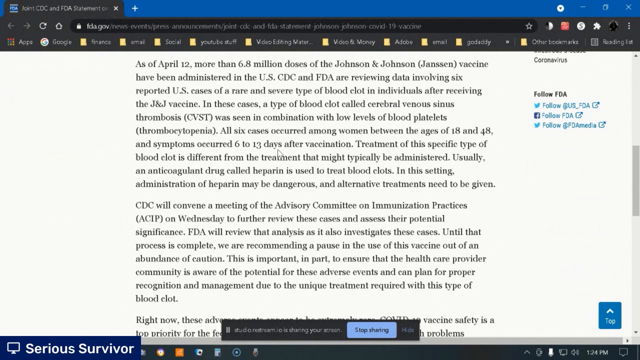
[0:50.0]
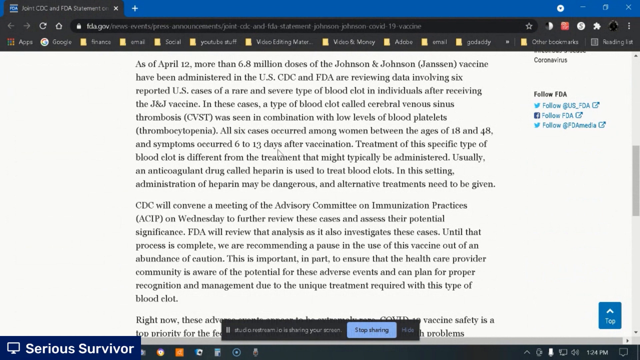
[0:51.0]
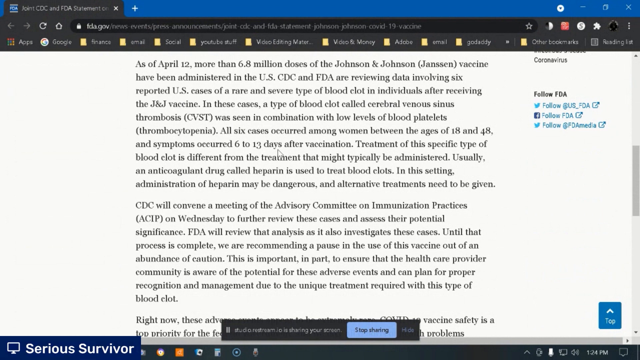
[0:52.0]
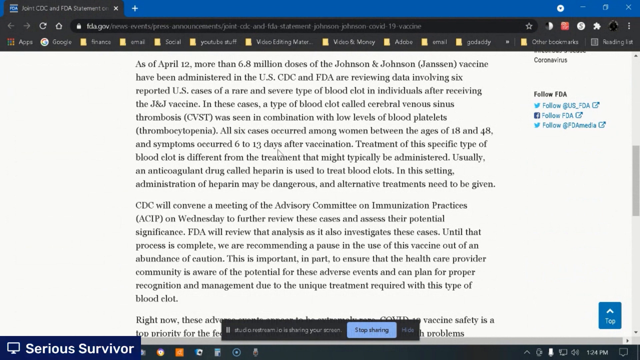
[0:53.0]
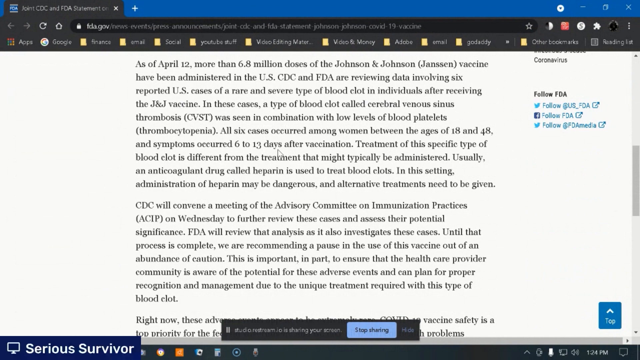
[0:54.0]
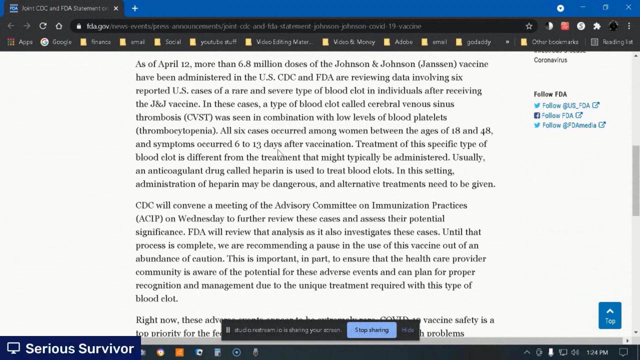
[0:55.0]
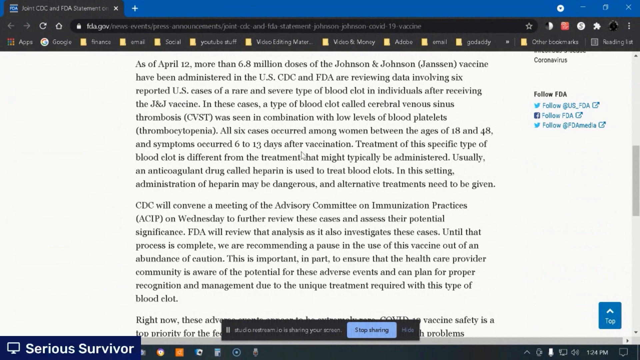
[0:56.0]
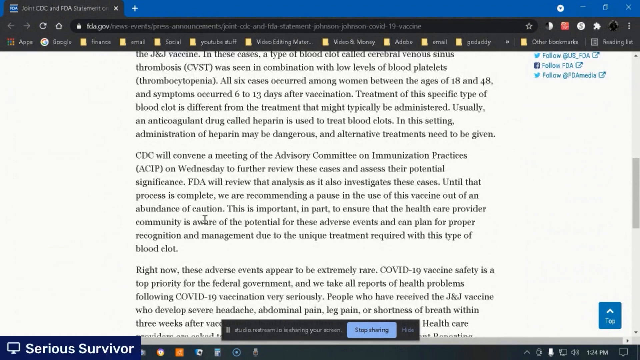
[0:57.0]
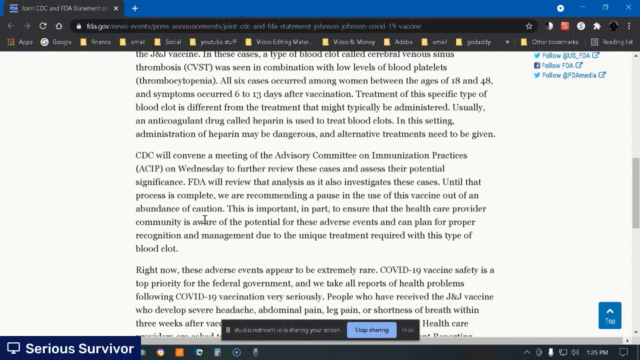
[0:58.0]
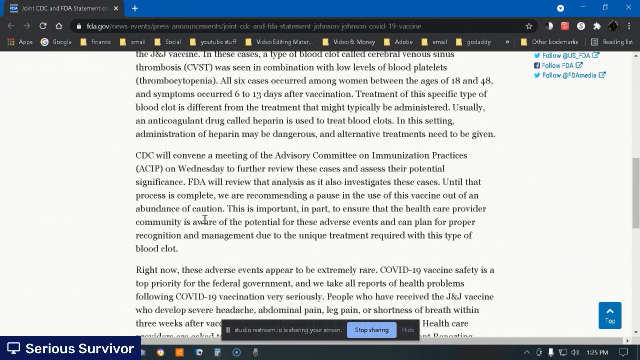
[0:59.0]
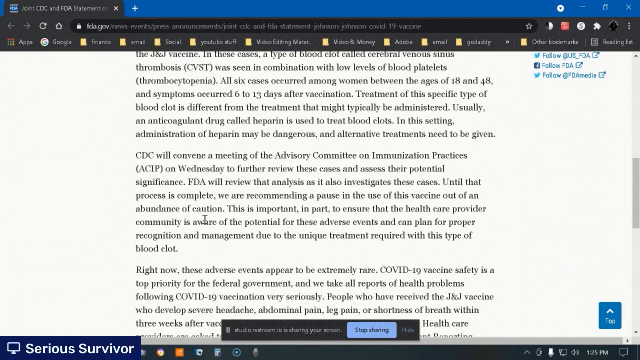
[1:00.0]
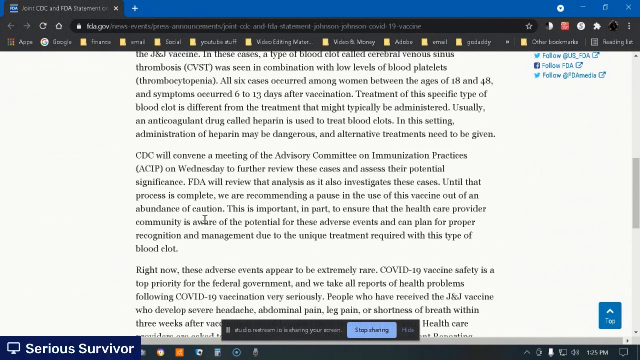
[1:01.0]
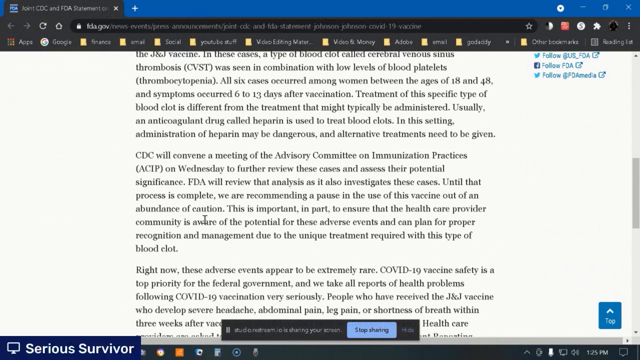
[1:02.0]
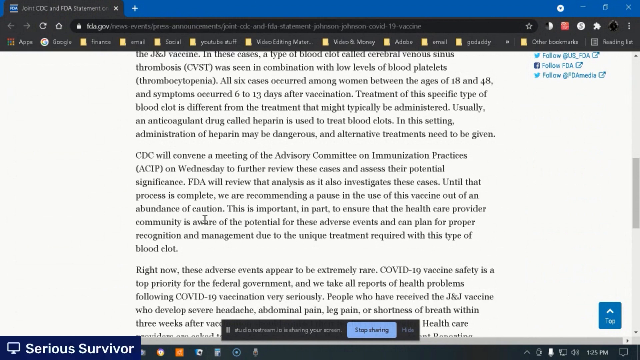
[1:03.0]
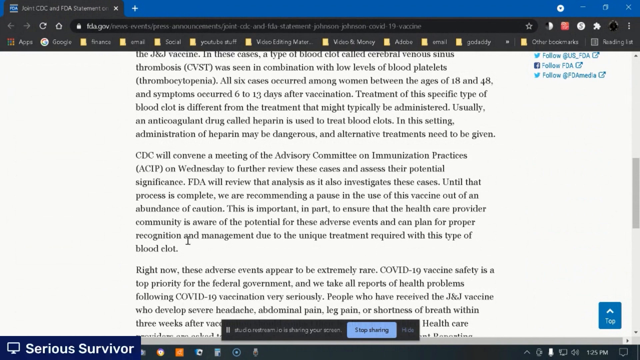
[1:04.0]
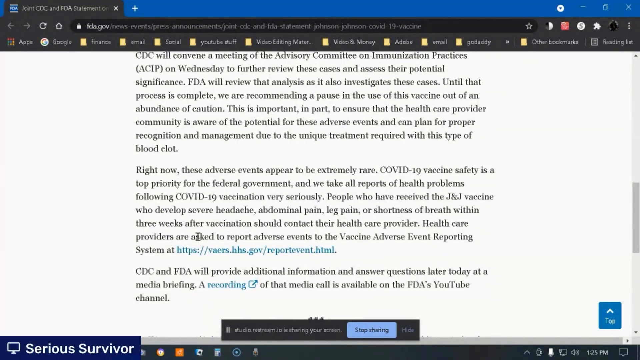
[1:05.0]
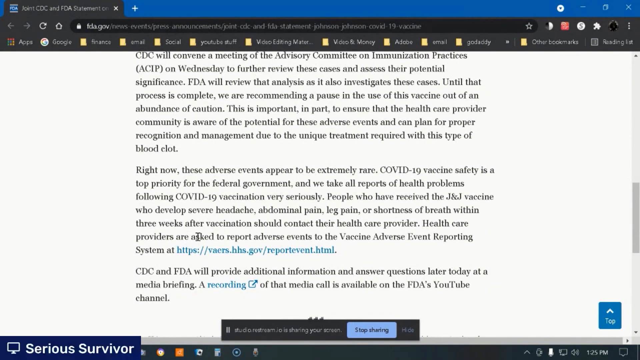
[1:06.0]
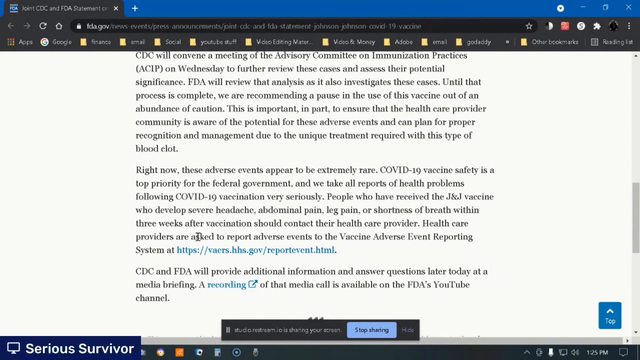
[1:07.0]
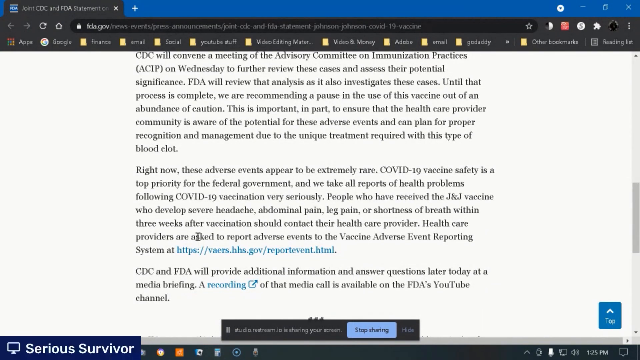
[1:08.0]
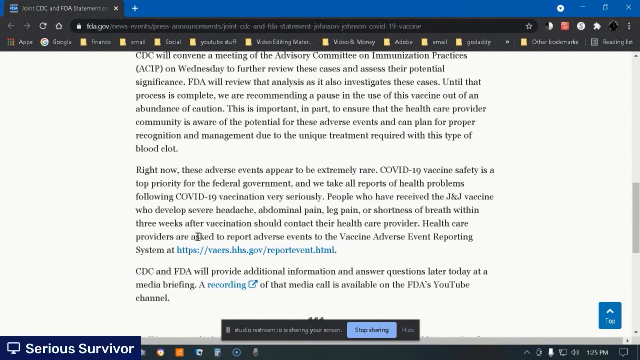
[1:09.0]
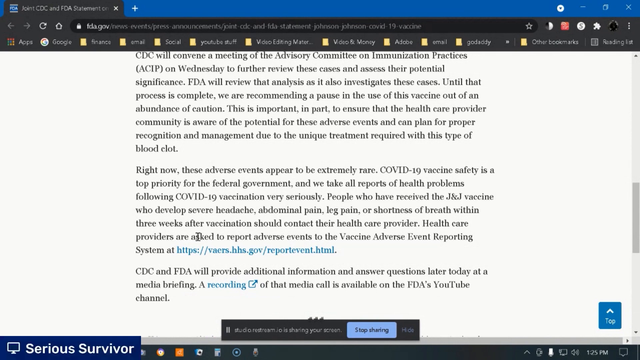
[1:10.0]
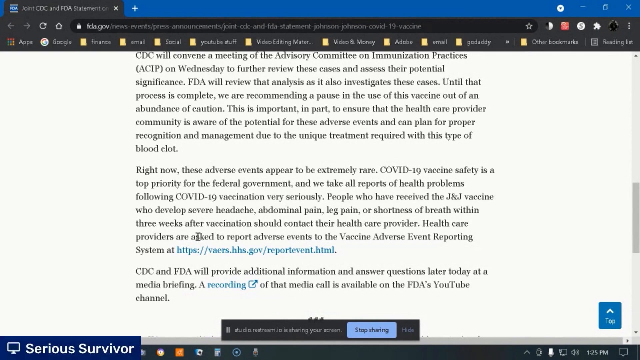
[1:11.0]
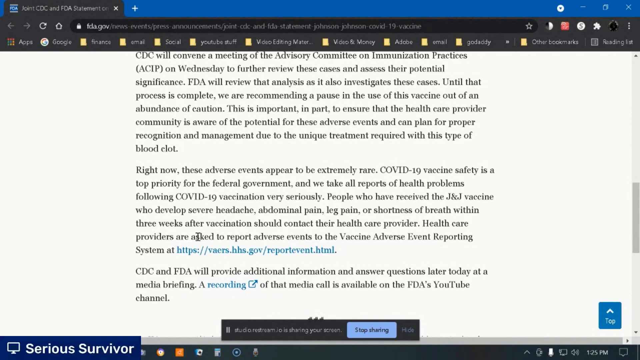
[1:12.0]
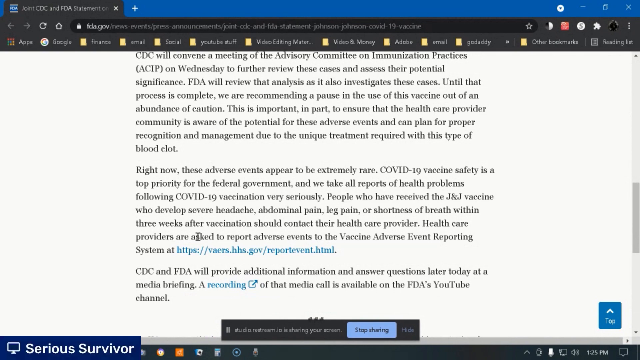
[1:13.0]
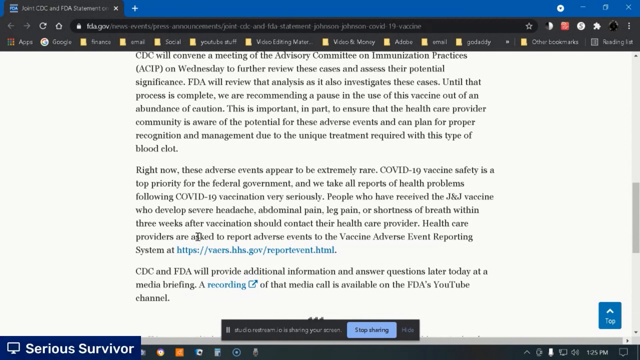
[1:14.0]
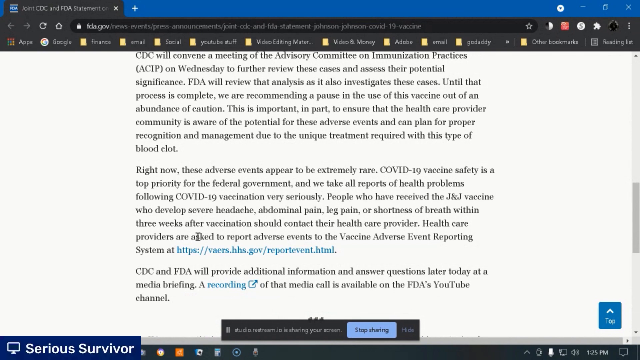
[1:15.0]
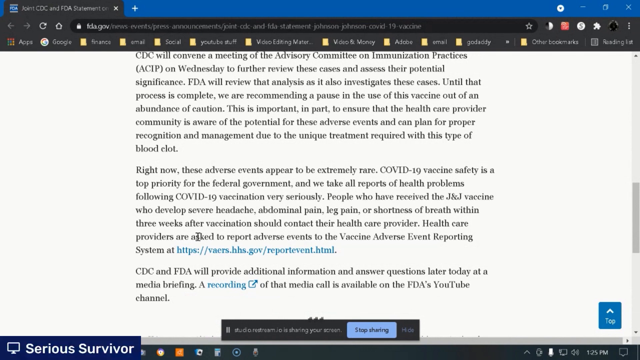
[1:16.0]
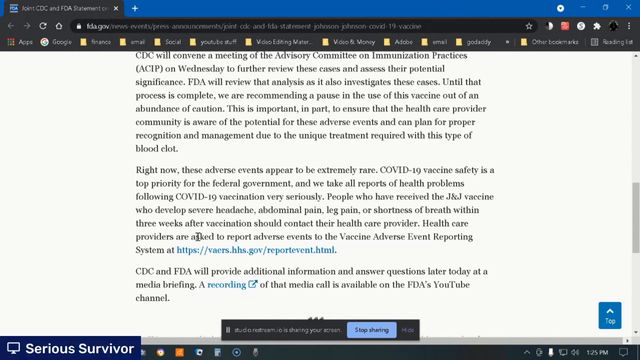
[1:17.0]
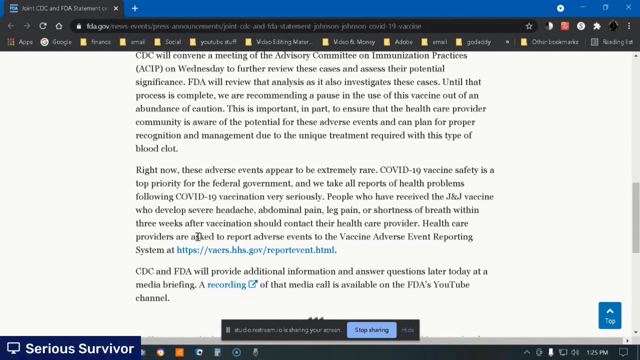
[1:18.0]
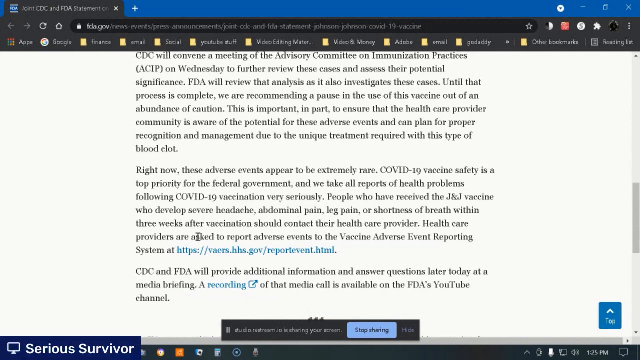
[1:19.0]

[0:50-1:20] The article says "6.8 million doses of Johnson & Johnson vaccine have been administered" and mentions a meeting of the "advisory committee on immunization practices." The man scrolls down through the article a little and moves his mouse over certain areas, including some links. Much of the text is about the CDC and FDA providing additional information, and it appears there will be a recording on the FDA's YouTube channel later that day. Further down, the article has little else on it, and he keeps going through it.